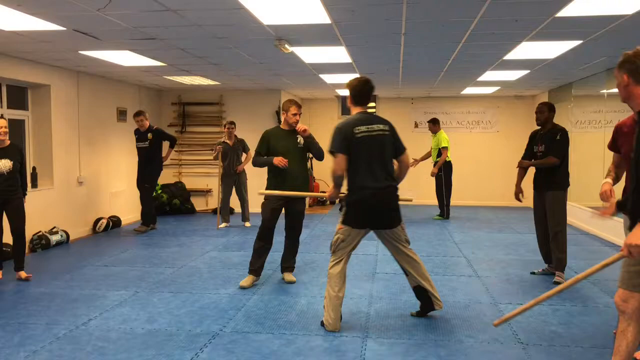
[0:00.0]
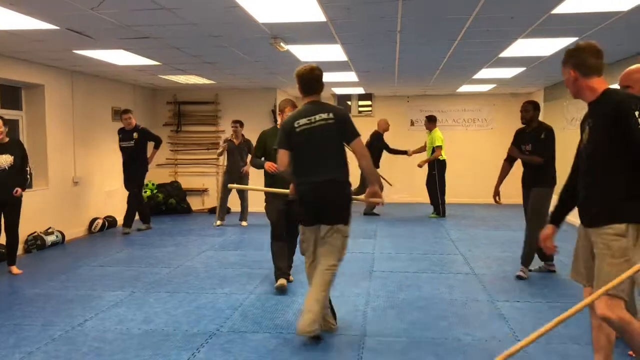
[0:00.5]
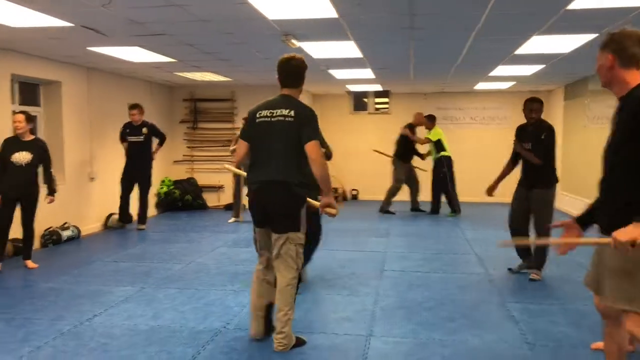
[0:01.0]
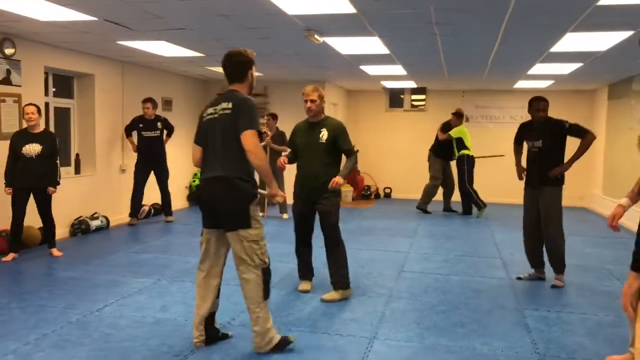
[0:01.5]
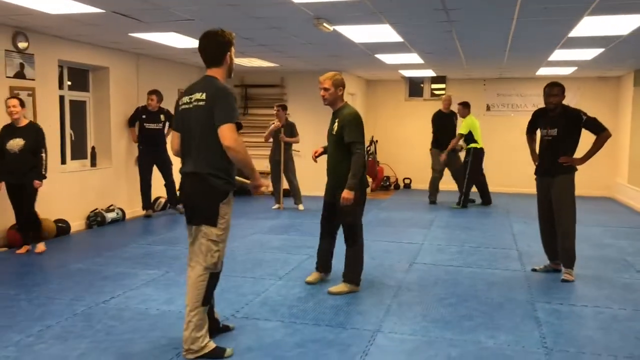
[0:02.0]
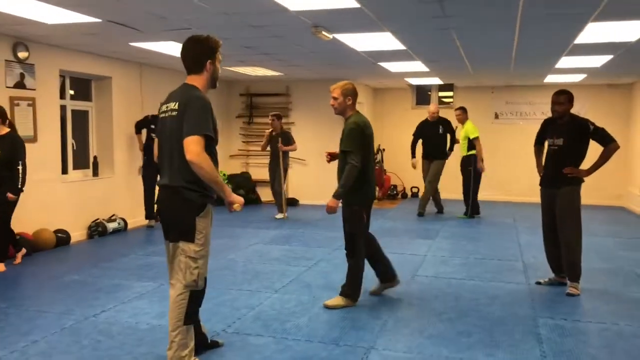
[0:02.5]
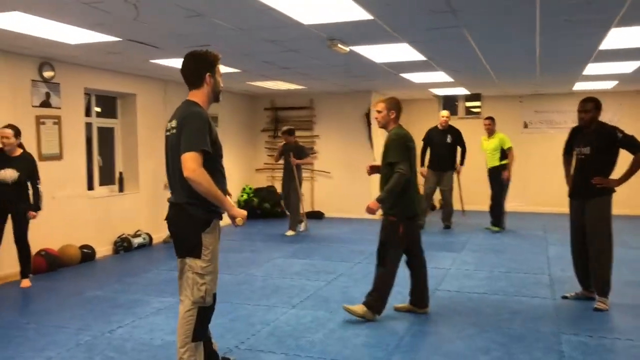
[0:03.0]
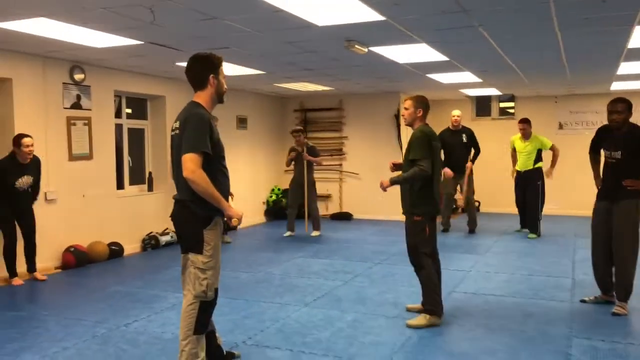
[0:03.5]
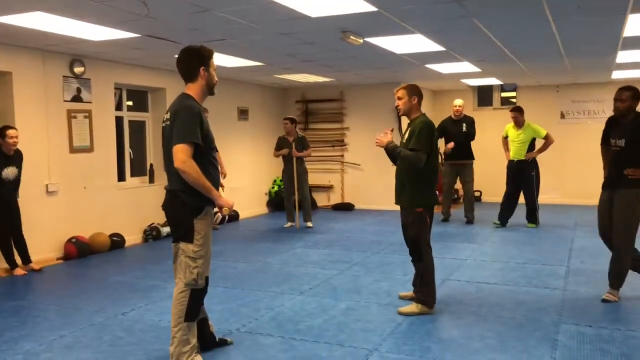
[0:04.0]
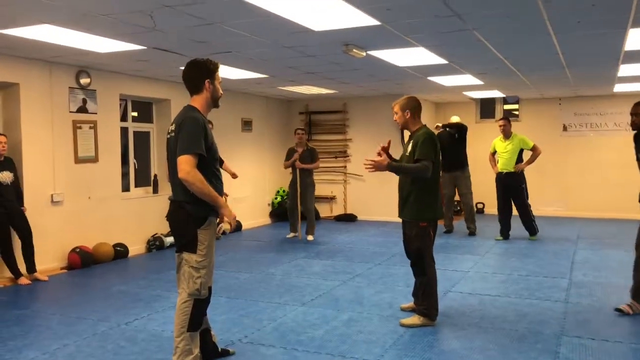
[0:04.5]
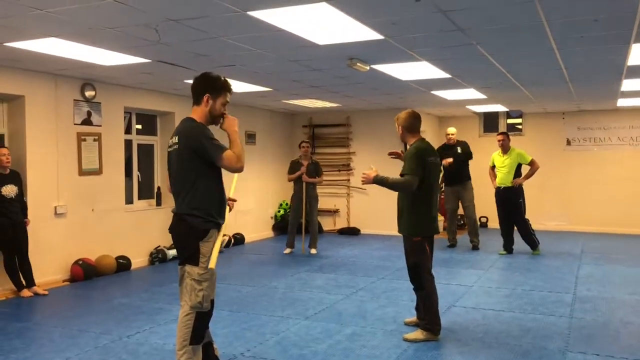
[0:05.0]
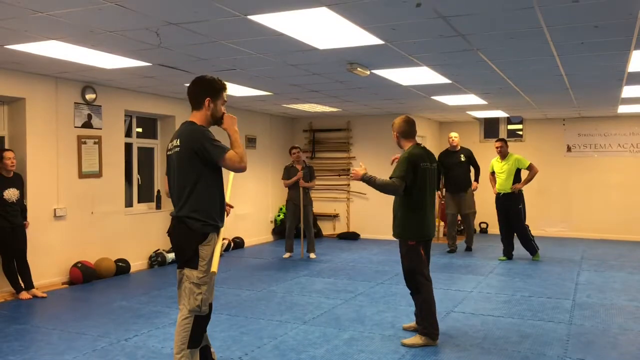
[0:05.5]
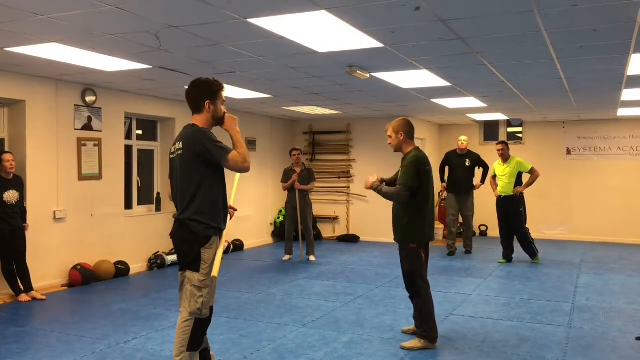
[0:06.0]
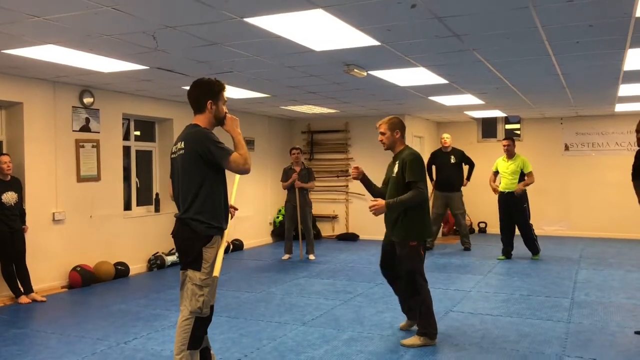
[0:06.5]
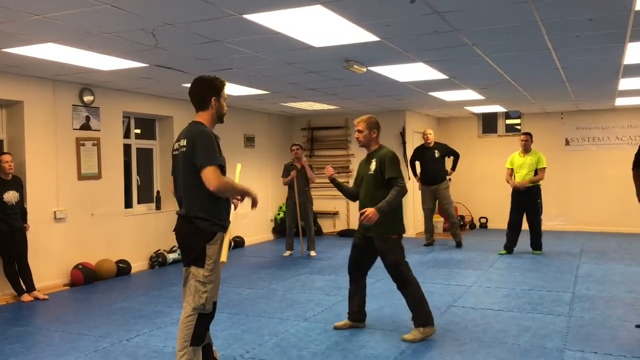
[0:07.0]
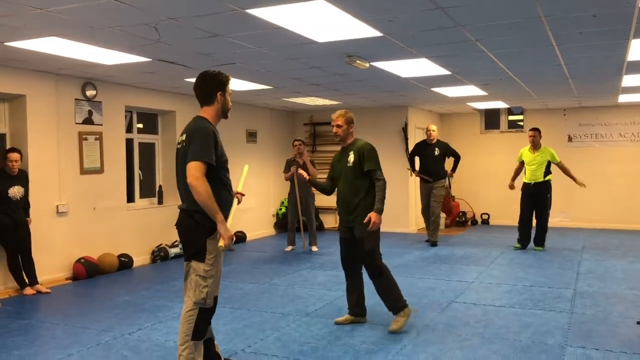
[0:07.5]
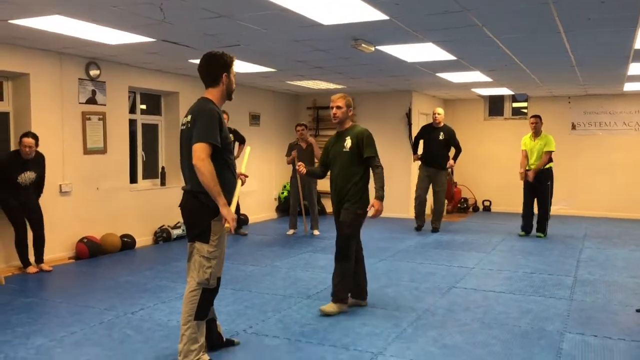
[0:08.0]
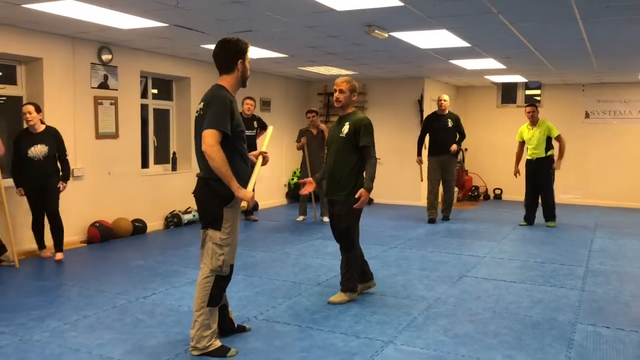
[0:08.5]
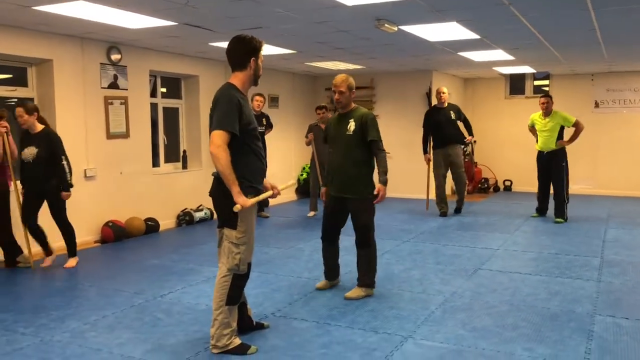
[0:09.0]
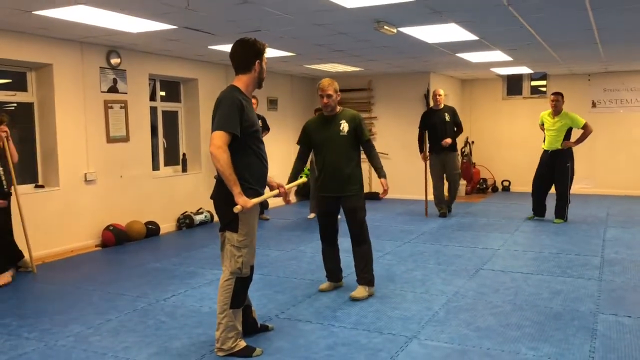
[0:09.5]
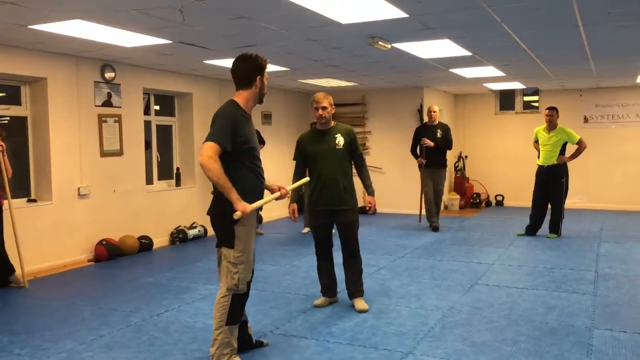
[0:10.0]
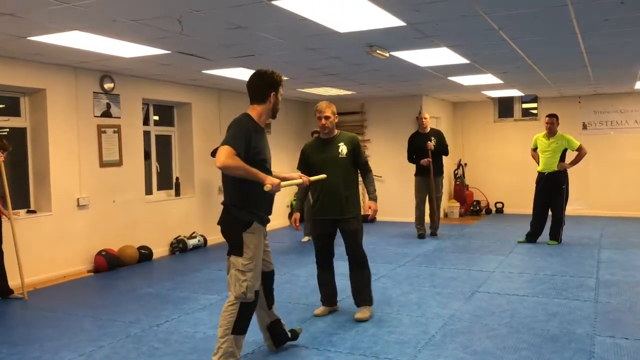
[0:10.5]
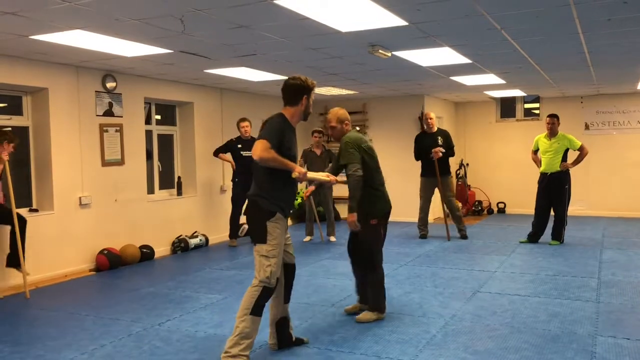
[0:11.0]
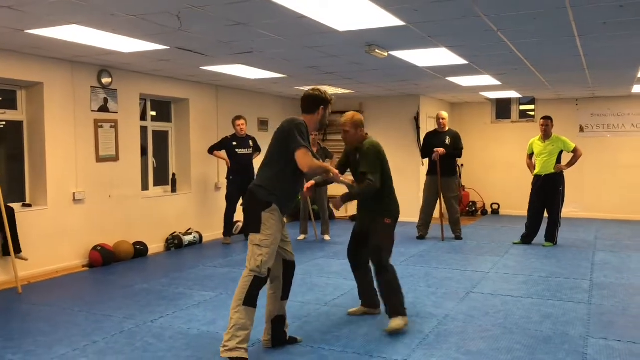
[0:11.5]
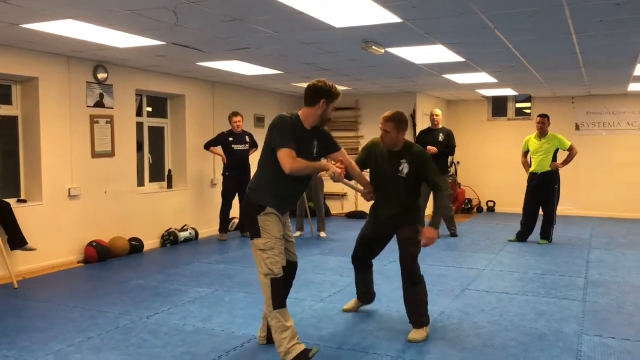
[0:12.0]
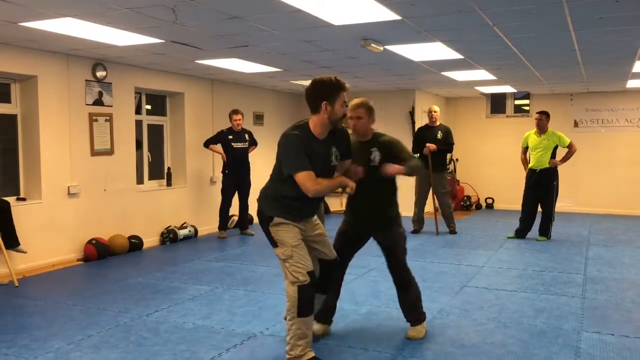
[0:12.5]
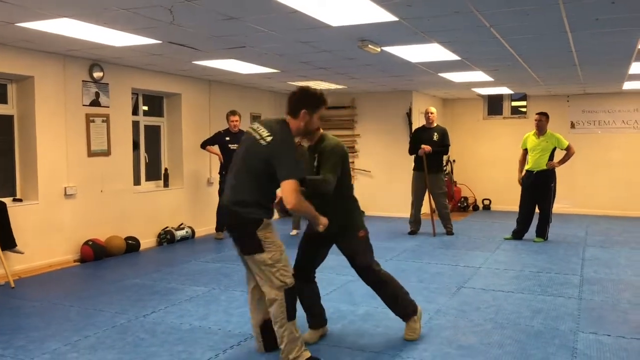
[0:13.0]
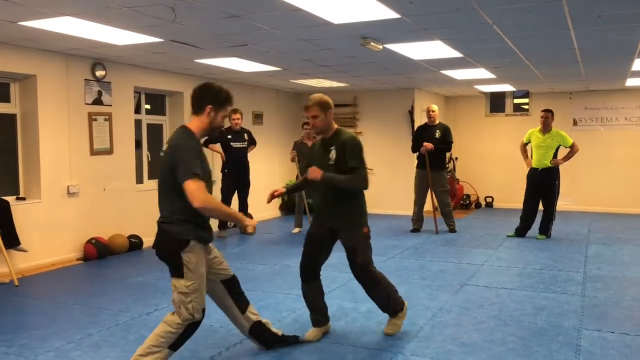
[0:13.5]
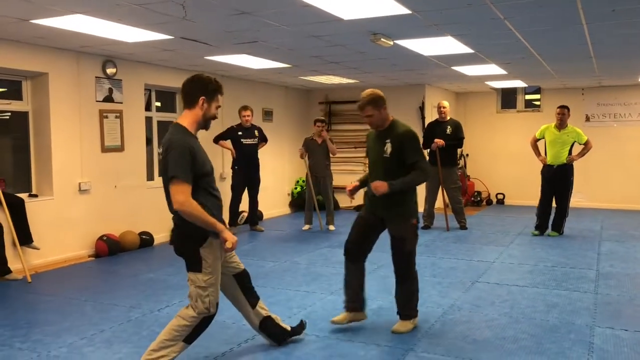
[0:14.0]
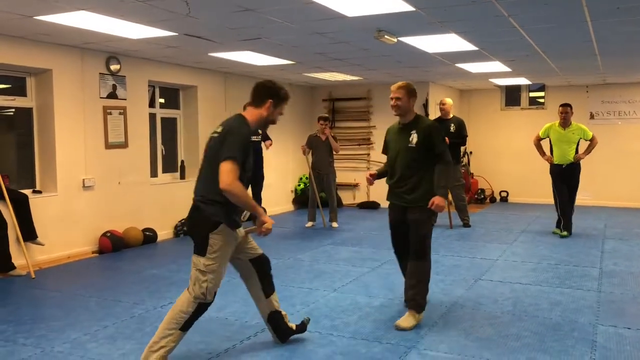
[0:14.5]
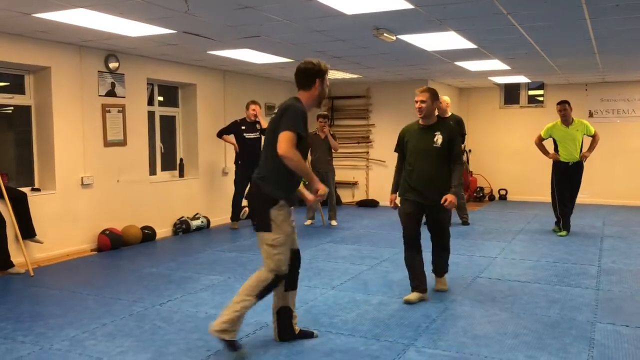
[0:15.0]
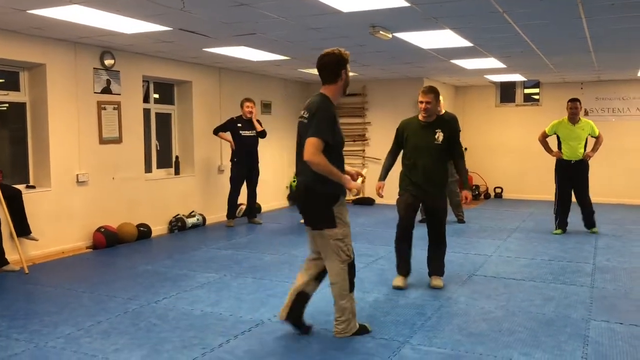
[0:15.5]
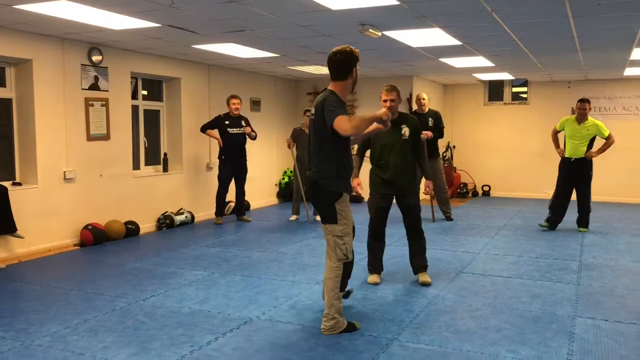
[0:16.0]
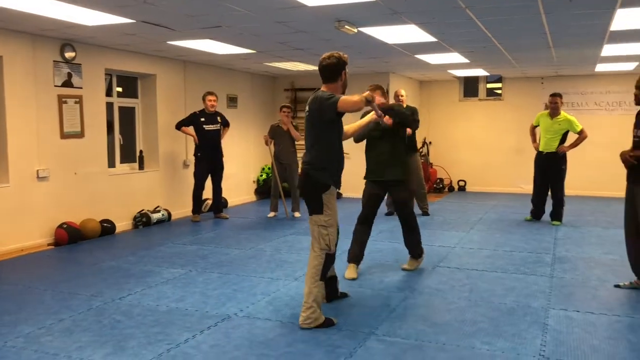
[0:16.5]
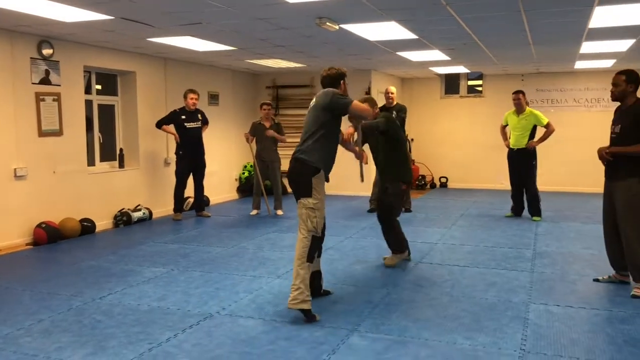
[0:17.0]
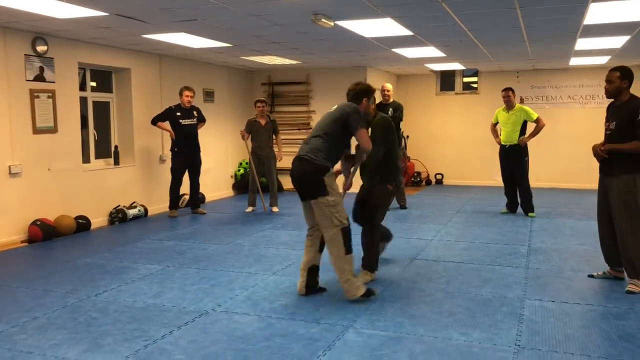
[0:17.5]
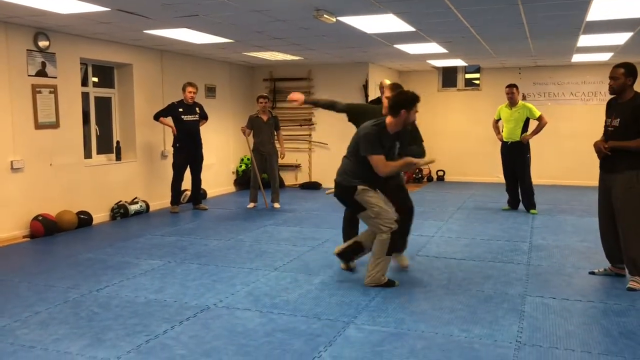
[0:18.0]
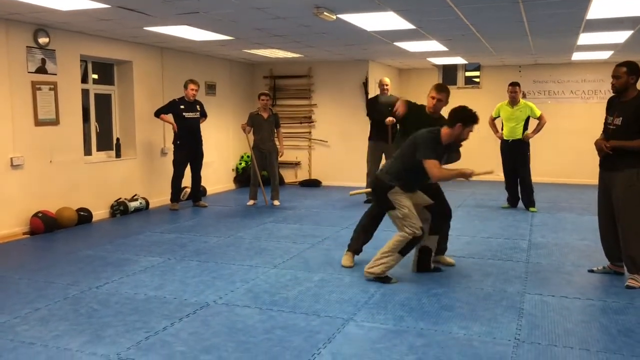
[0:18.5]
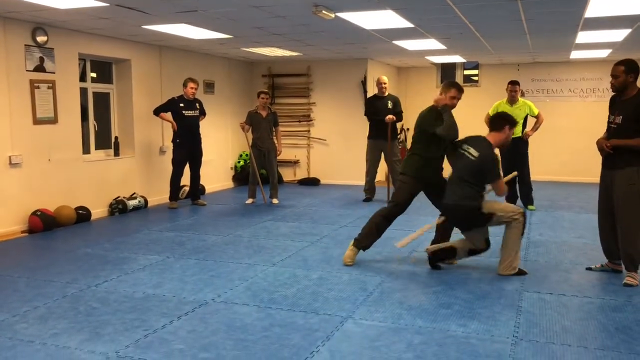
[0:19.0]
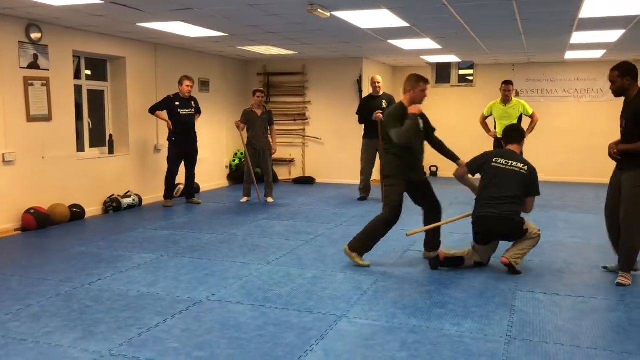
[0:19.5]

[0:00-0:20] People are on a mat in a room that appears to be a martial arts studio, with fluorescent white lighting above. Multiple people stand around holding brown sticks, and it seems to be some kind of martial arts fitness class using sticks. A man in a black shirt and khaki-colored pants faces away from the camera with a stick in hand. The instructor, dressed in all black, stands facing that man and therefore facing the camera. Both of them then move toward the left side of the frame. The instructor, in the middle, seems to be instructing the rest of the people standing on the perimeter of the blue mat, apparently explaining what to do, perhaps in a situation like that one. He moves his hands in a way that seems to show them how to possibly move the sticks they all hold. He then faces the original man who is facing away from the camera, and that man tilts his stick to point at the instructor and pushes it toward him.